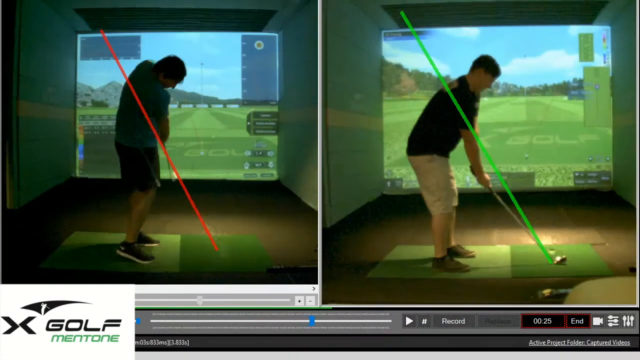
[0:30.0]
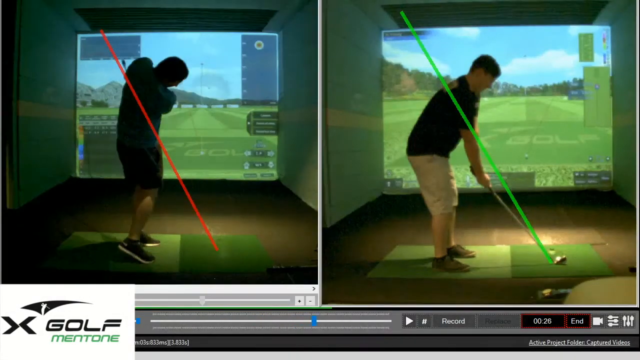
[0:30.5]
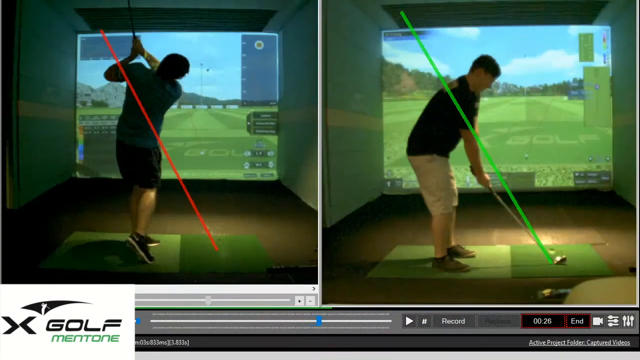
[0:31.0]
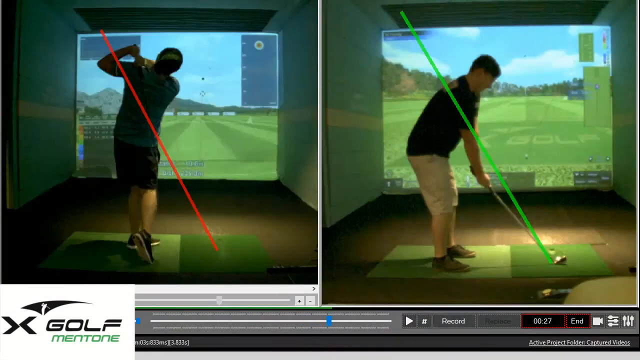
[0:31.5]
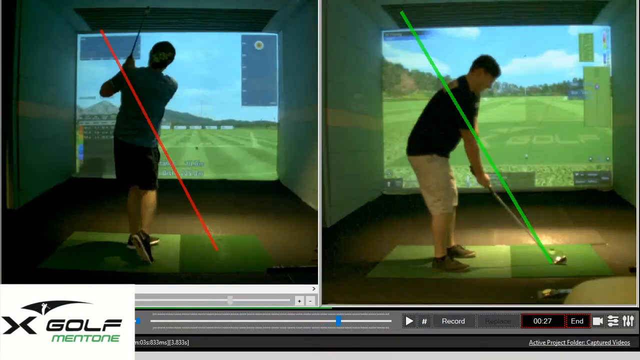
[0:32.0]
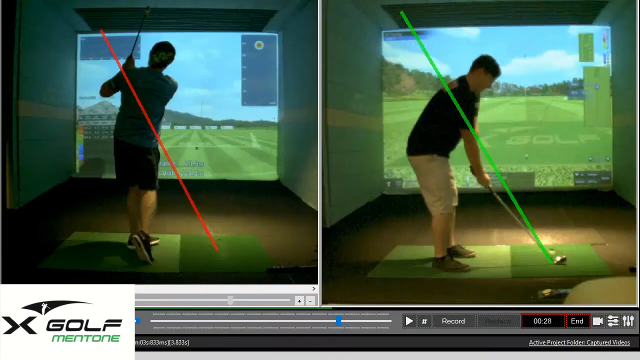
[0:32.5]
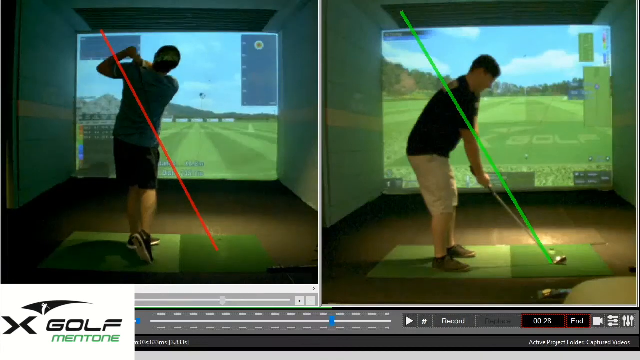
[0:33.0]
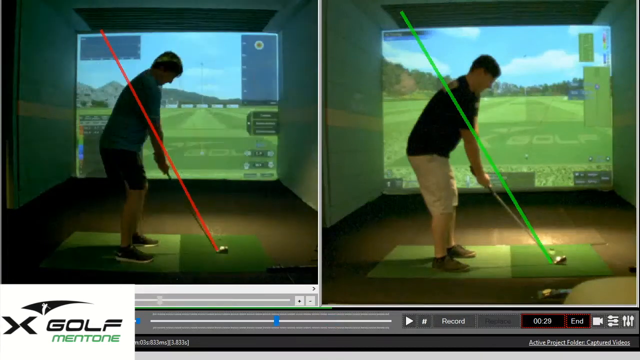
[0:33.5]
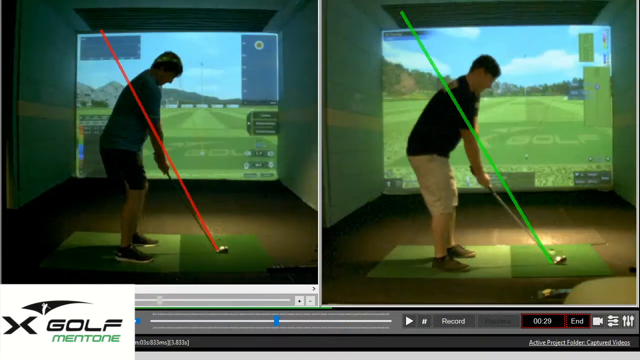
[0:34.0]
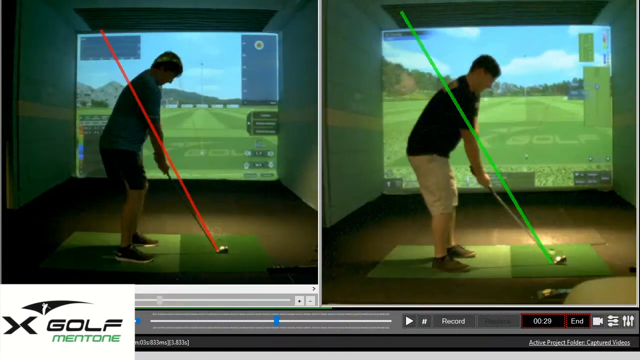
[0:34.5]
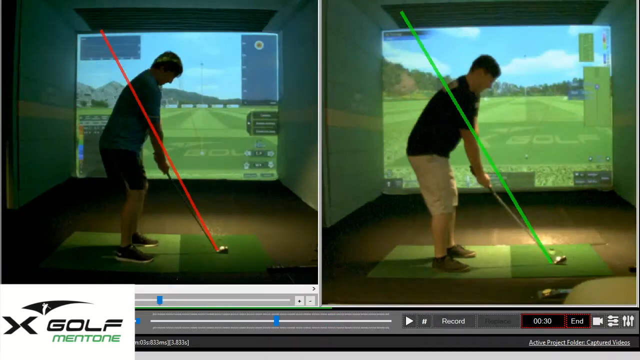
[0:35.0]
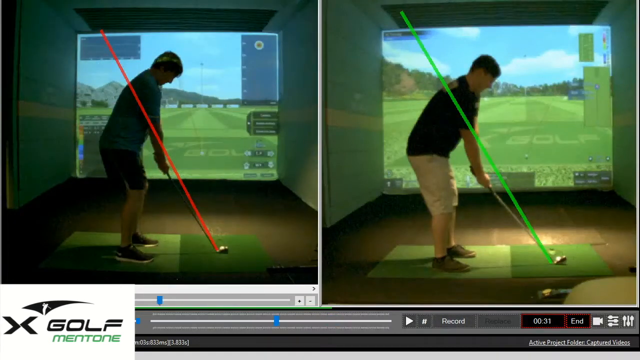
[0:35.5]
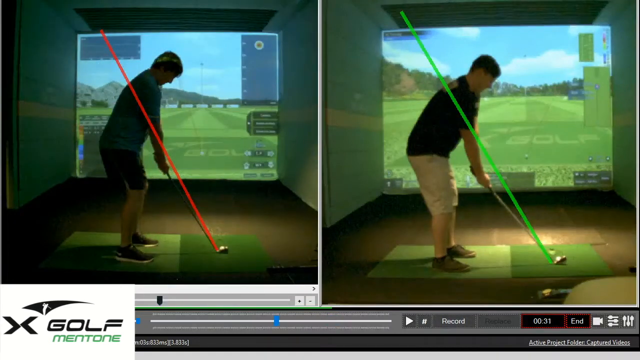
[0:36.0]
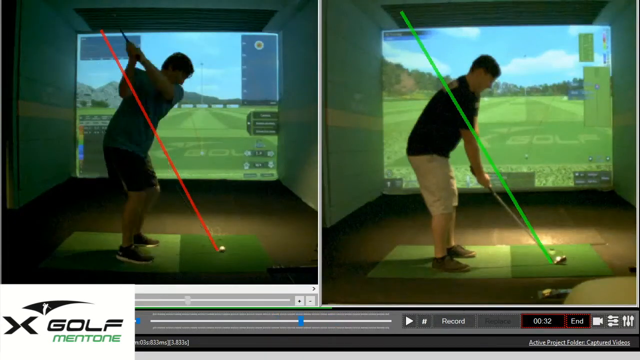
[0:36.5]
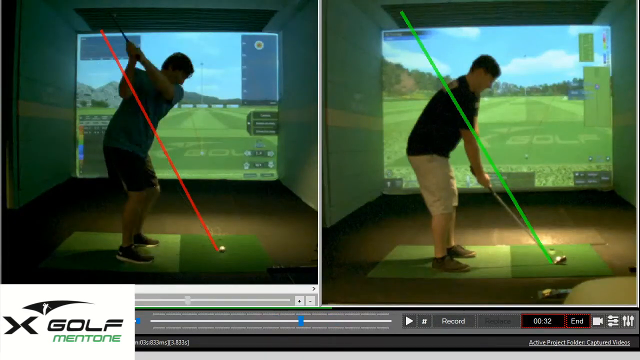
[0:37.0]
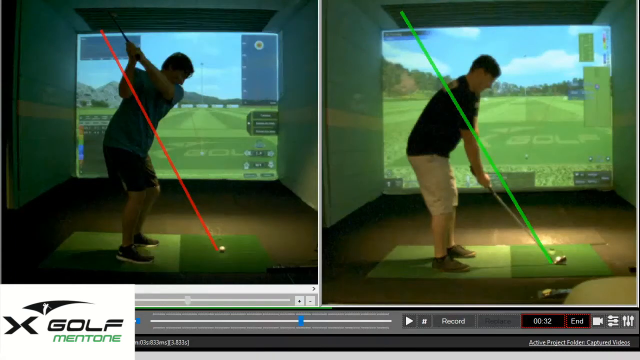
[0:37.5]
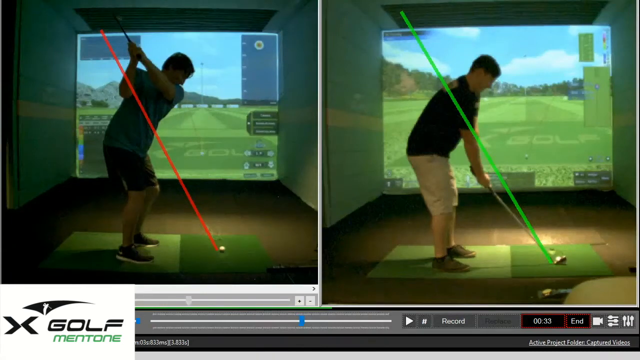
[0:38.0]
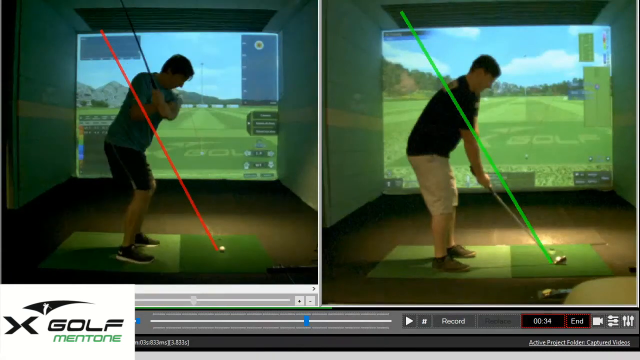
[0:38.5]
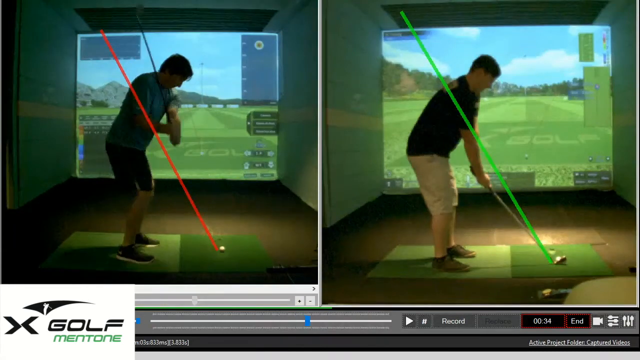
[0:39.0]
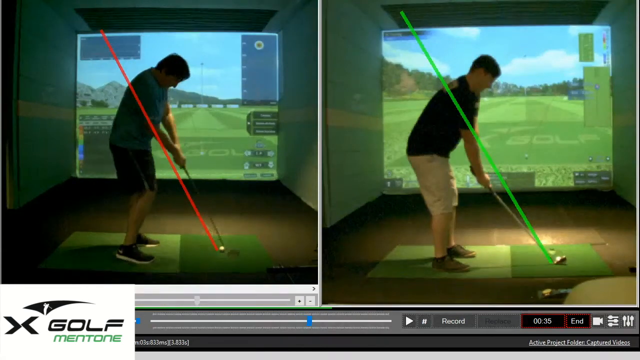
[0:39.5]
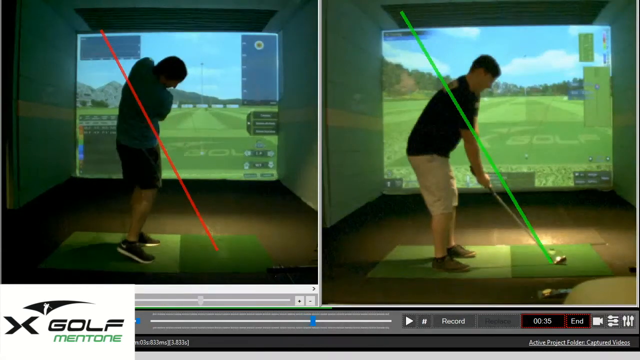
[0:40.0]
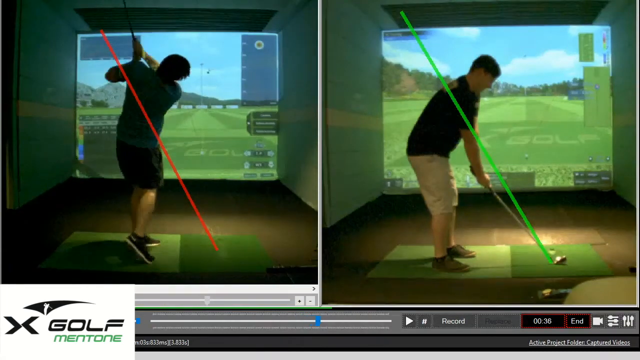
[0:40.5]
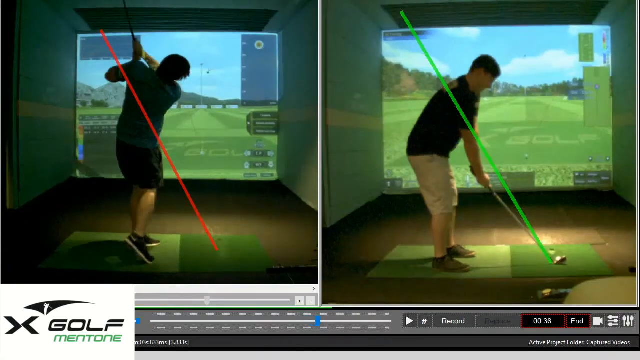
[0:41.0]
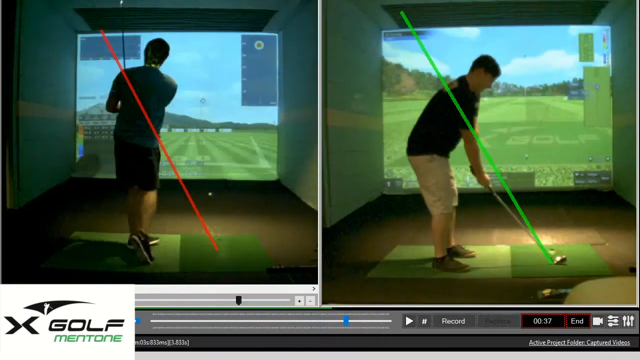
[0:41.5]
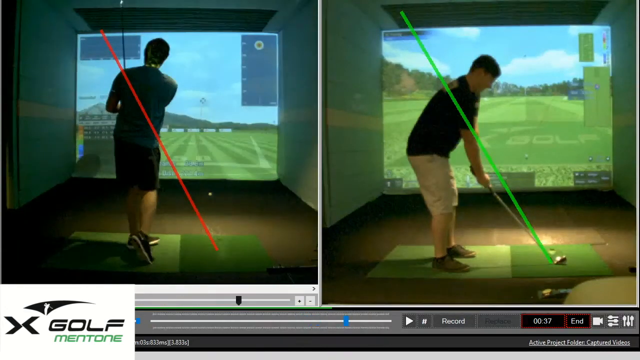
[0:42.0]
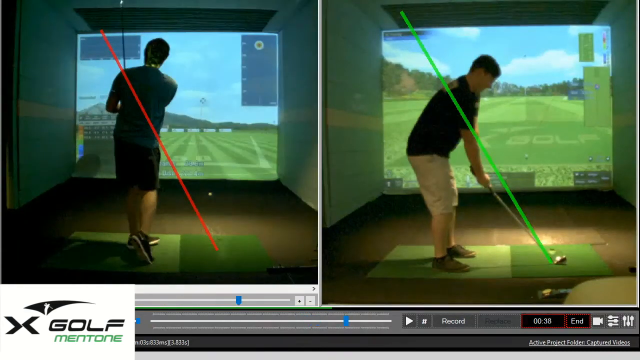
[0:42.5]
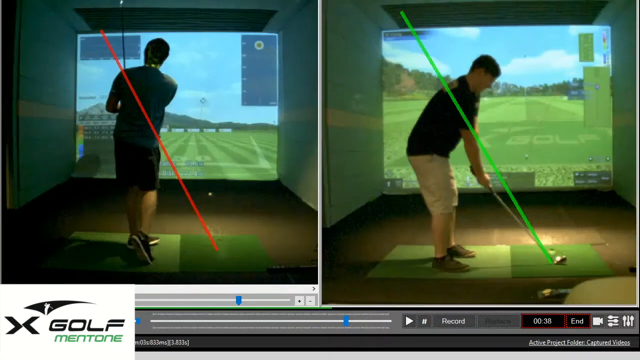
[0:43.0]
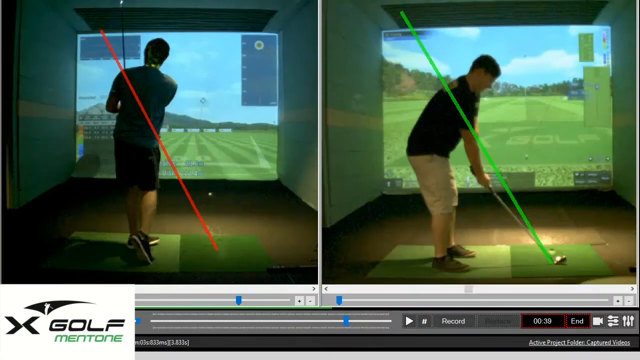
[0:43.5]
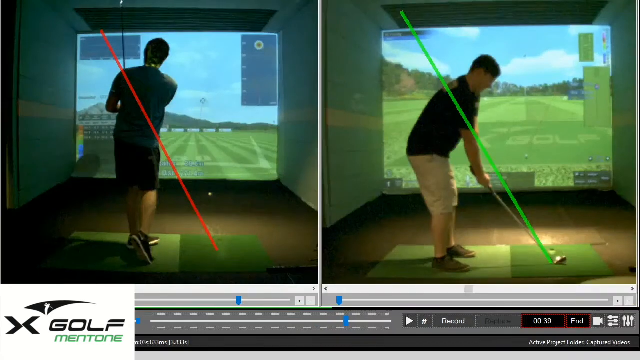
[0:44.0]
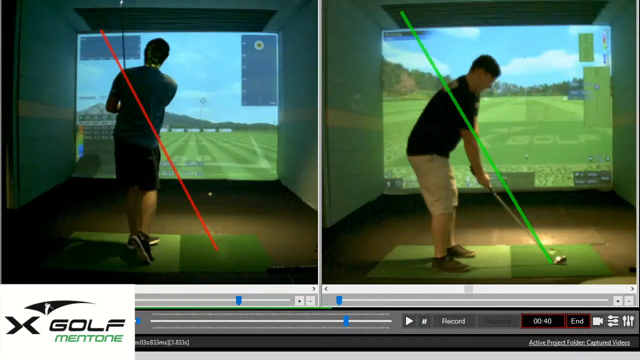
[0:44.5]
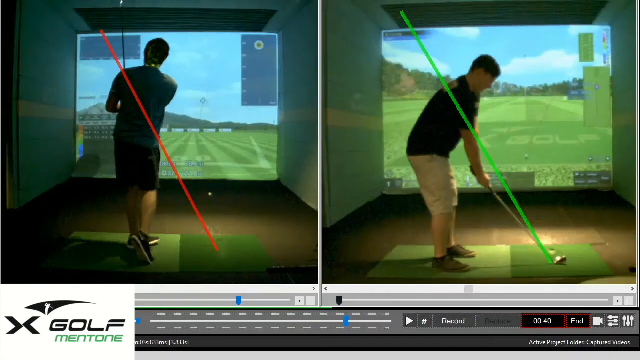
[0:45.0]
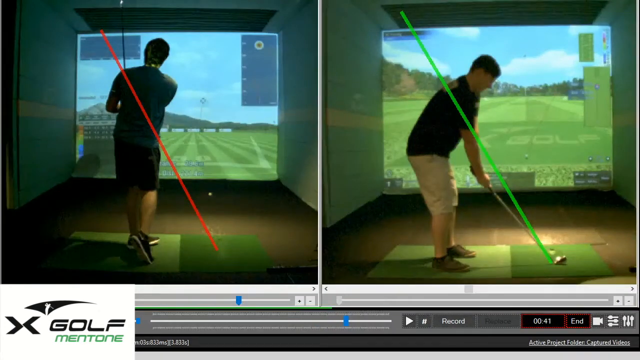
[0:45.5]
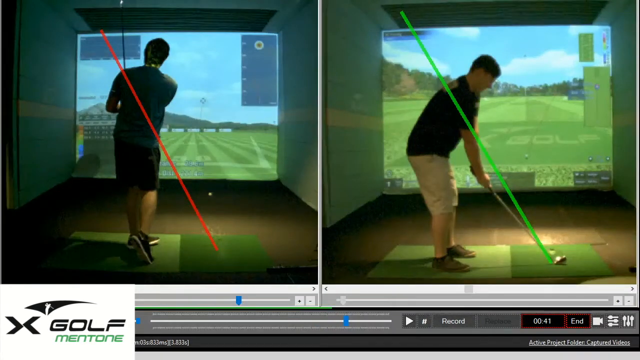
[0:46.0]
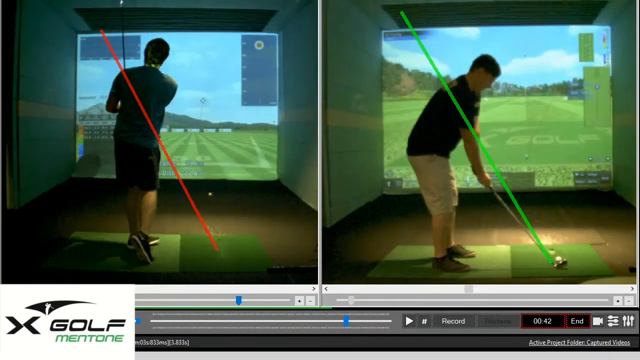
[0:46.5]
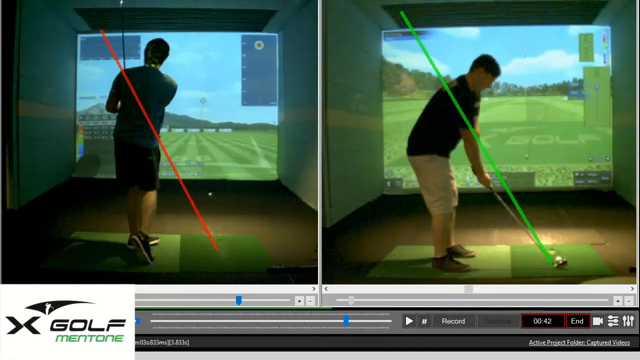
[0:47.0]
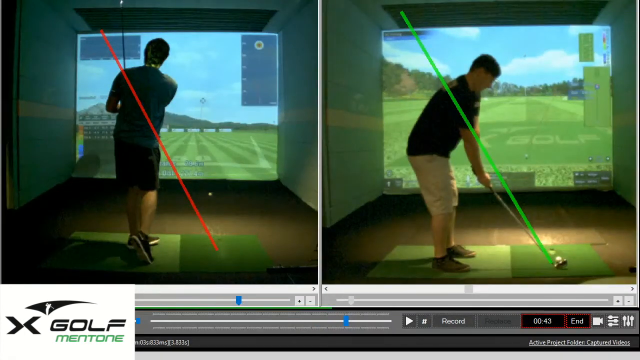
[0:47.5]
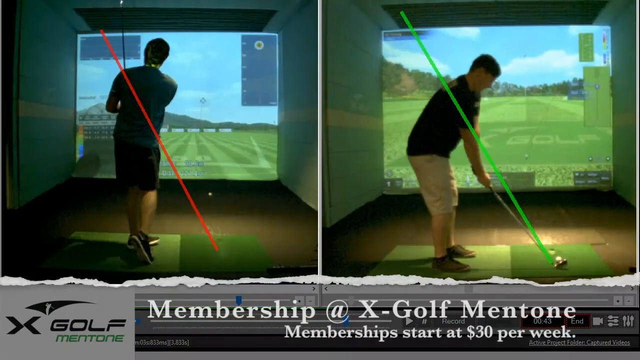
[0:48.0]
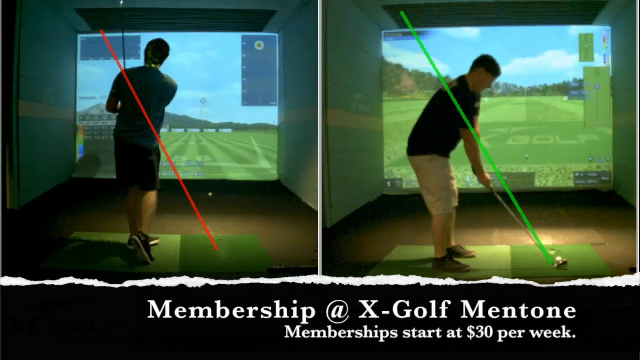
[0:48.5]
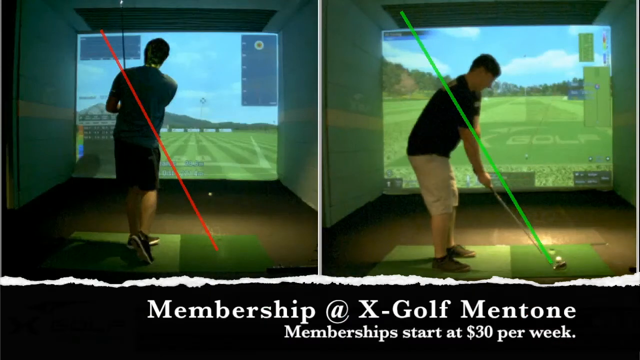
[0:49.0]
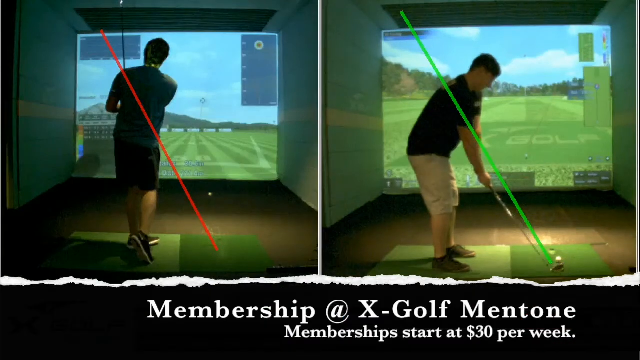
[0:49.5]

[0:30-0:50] The split screen continues in this portion of the video from X Golf Mentone, the name of the company. On the left, a golfer in a green shirt and black shorts swings his club with a red line going through the graphic, indicating the wrong way to swing. On the right, a golfer in a black shirt and tan khaki shorts swings his club with a green line going through the graphic, indicating the correct way. A timer is counting down, and a ticker at the bottom reads "membership at X-Golf Mentone."